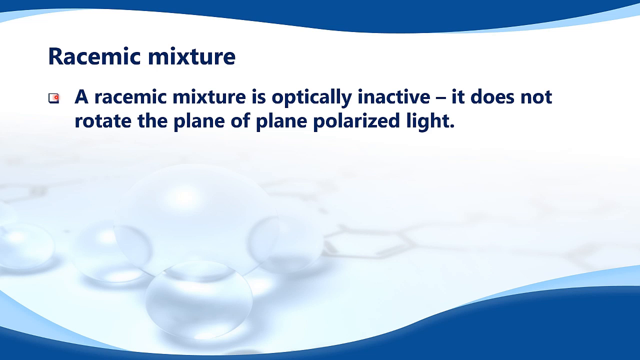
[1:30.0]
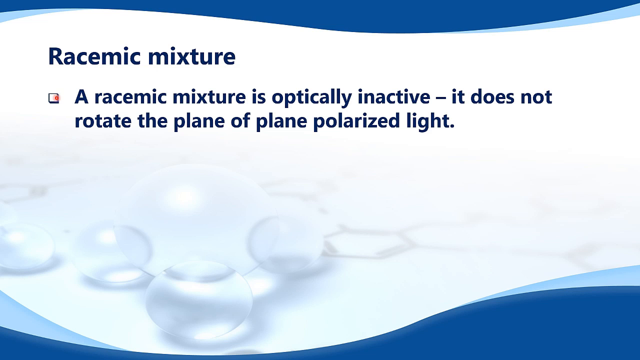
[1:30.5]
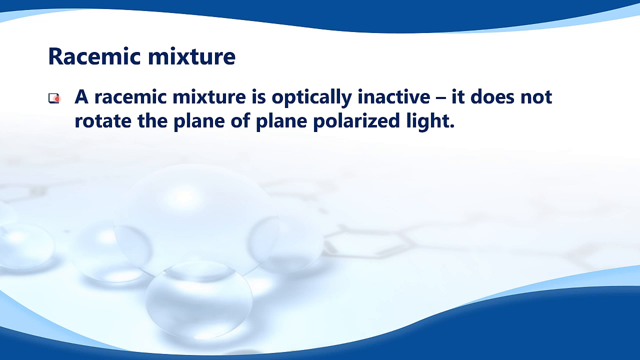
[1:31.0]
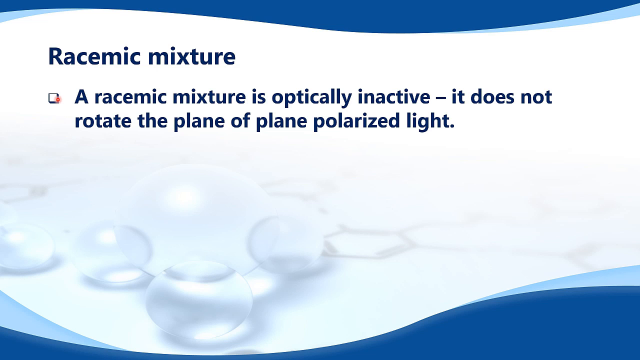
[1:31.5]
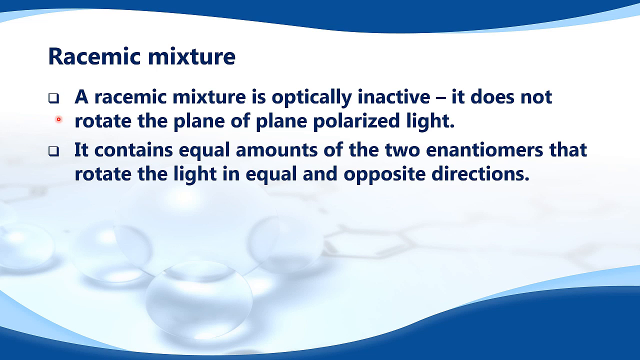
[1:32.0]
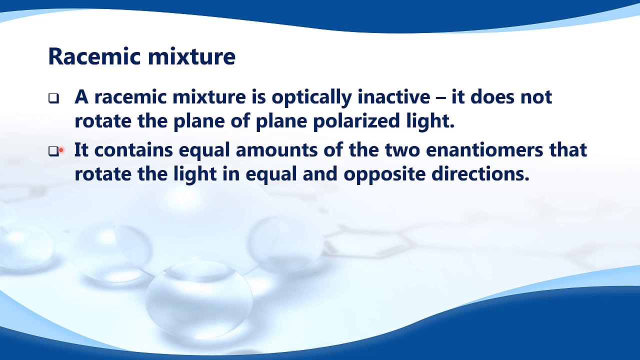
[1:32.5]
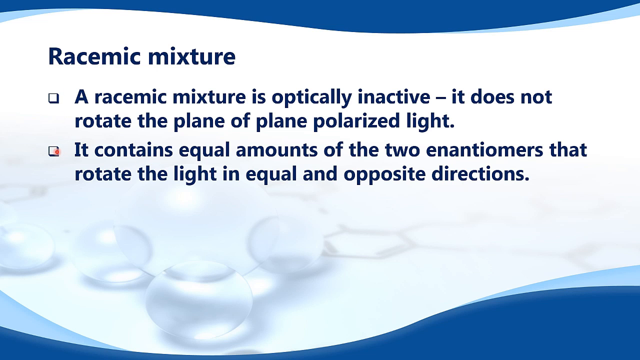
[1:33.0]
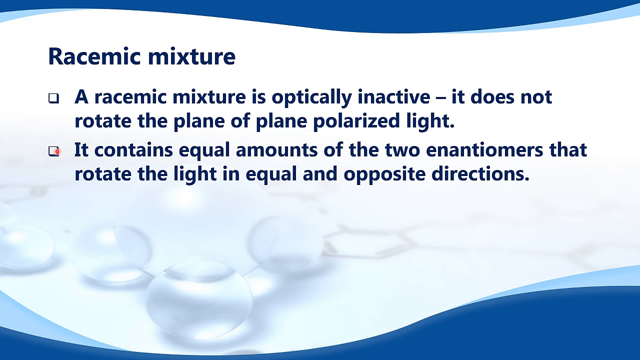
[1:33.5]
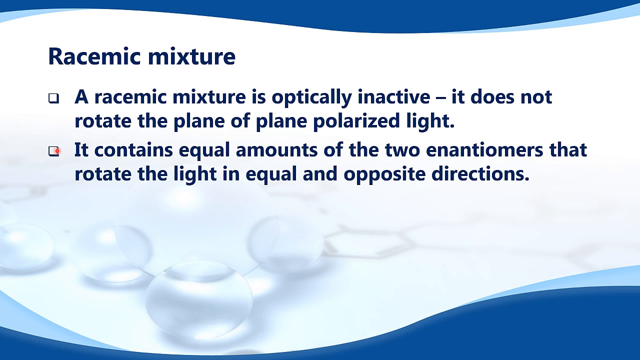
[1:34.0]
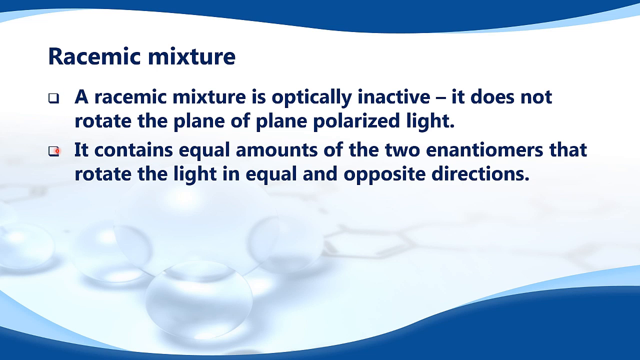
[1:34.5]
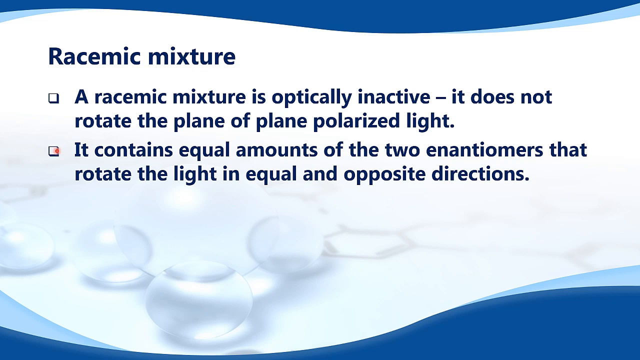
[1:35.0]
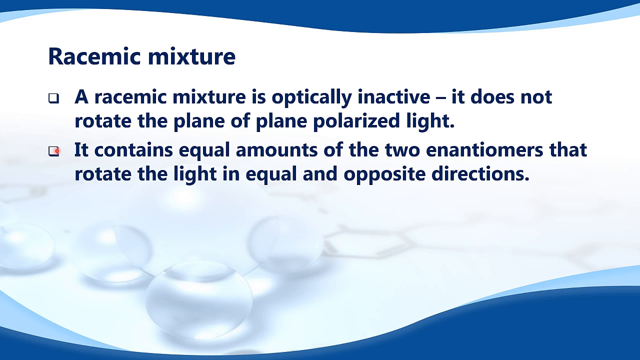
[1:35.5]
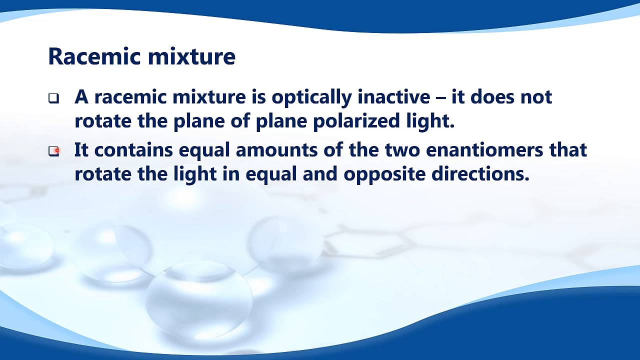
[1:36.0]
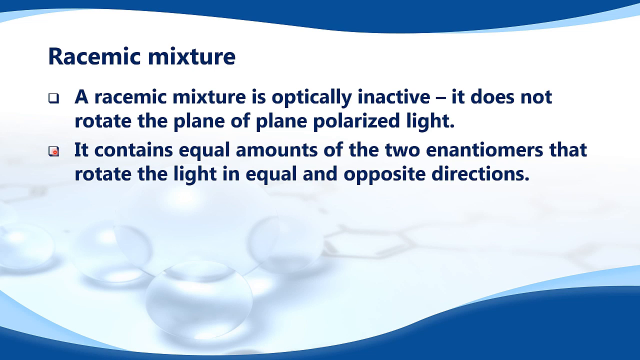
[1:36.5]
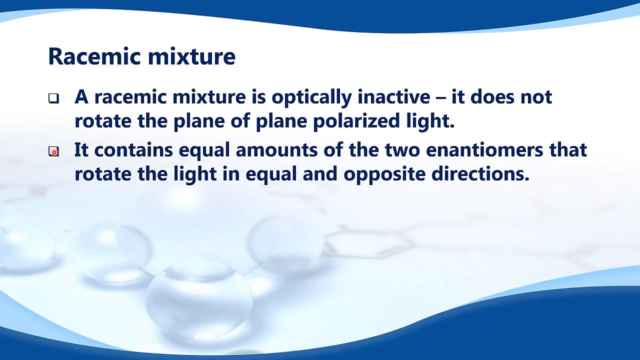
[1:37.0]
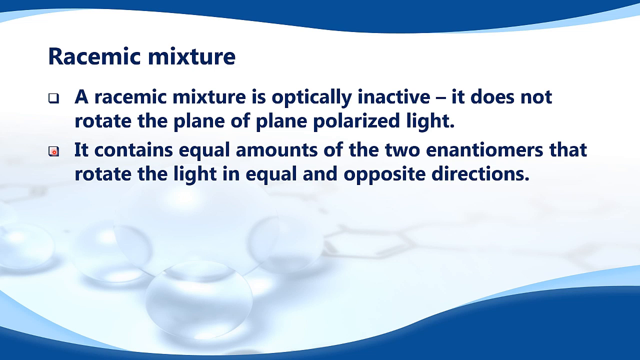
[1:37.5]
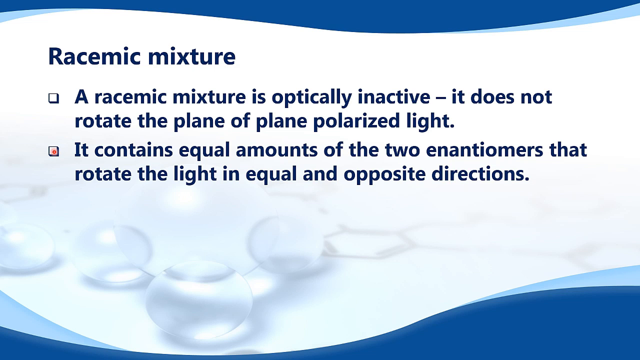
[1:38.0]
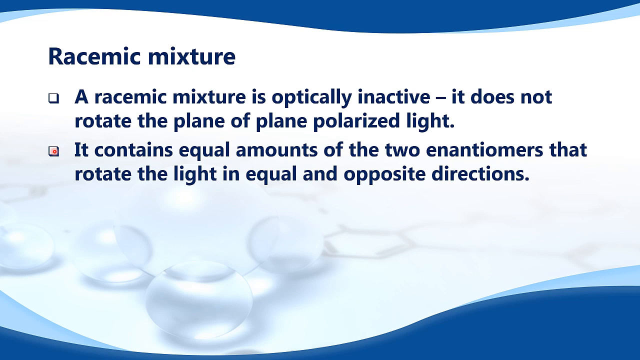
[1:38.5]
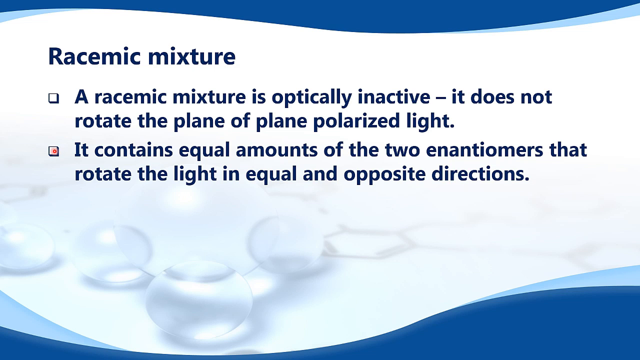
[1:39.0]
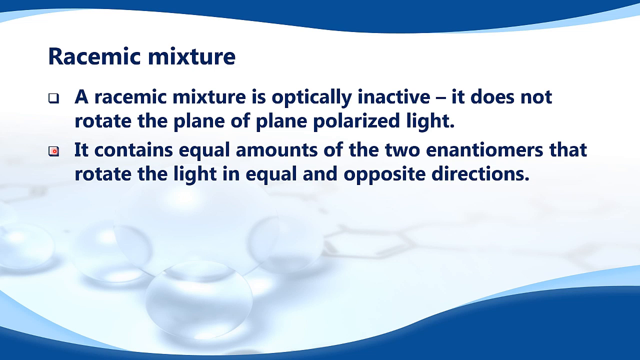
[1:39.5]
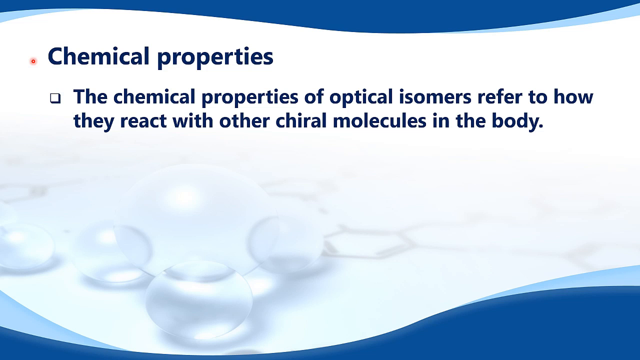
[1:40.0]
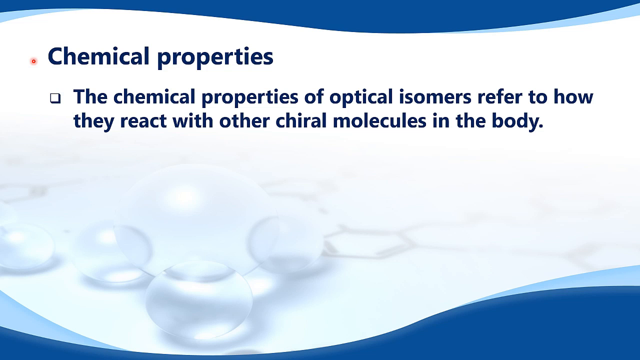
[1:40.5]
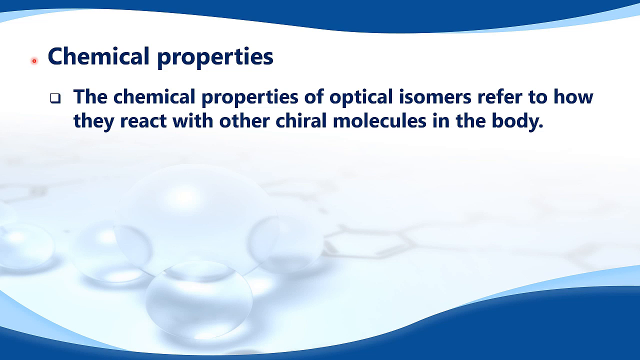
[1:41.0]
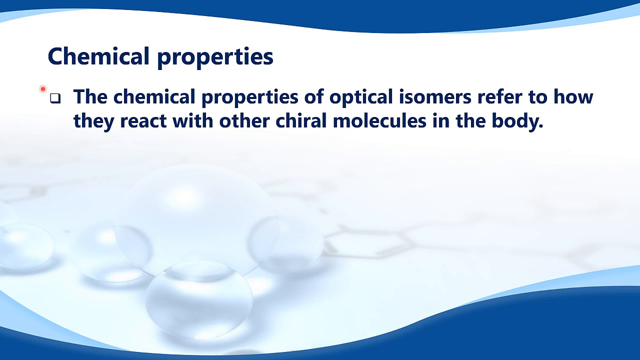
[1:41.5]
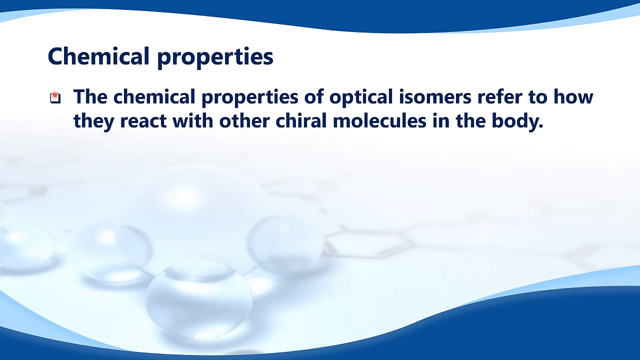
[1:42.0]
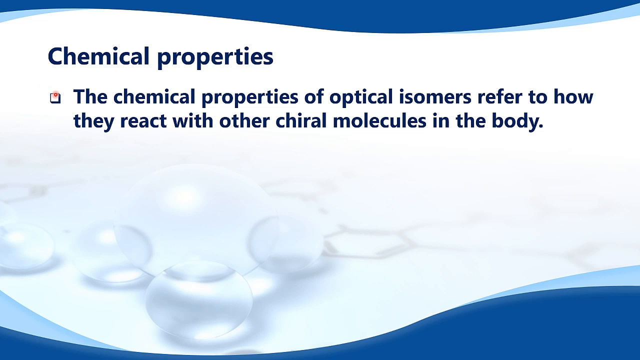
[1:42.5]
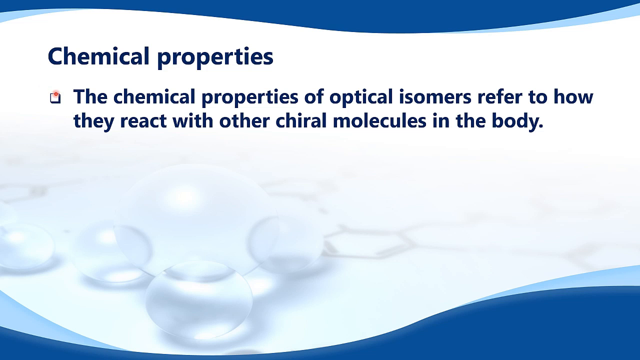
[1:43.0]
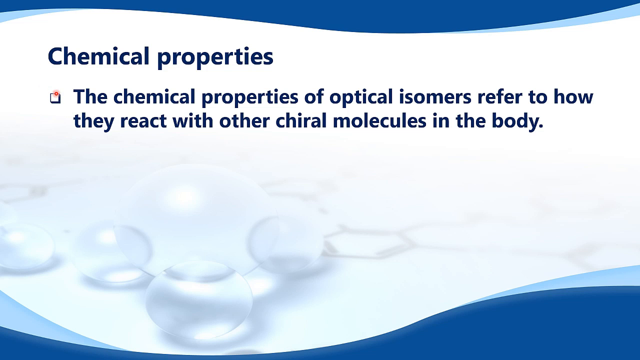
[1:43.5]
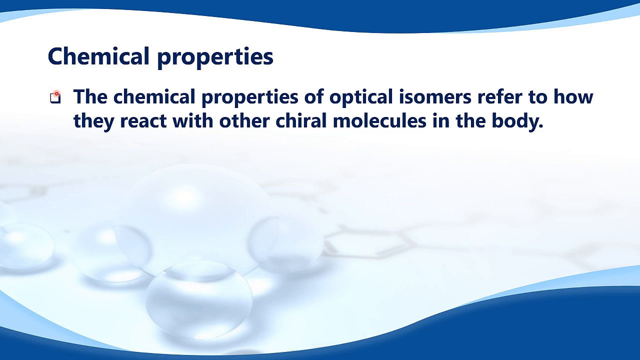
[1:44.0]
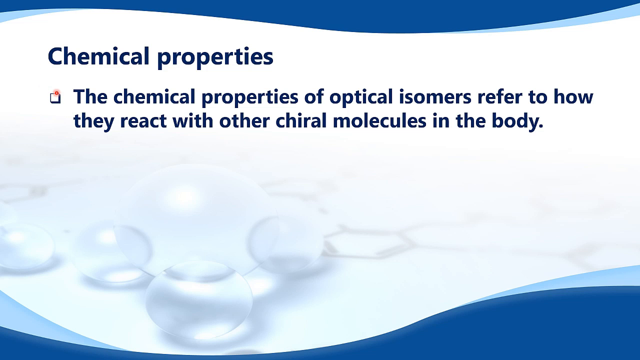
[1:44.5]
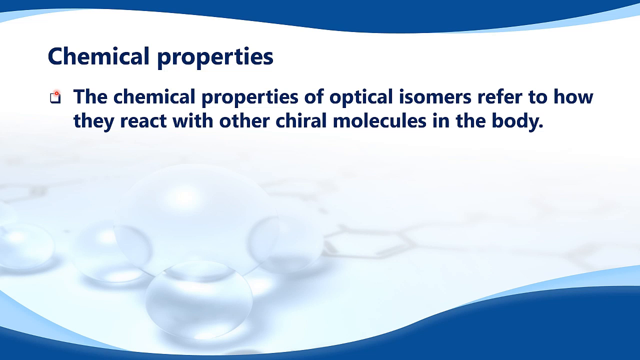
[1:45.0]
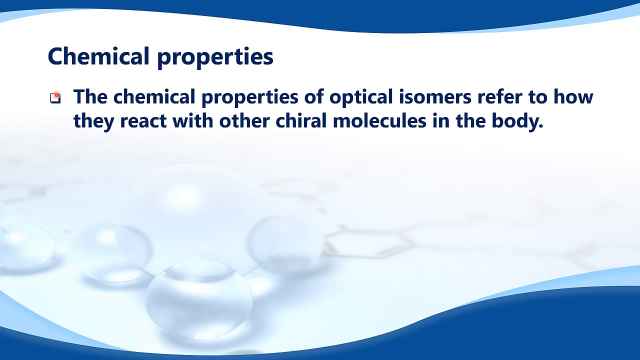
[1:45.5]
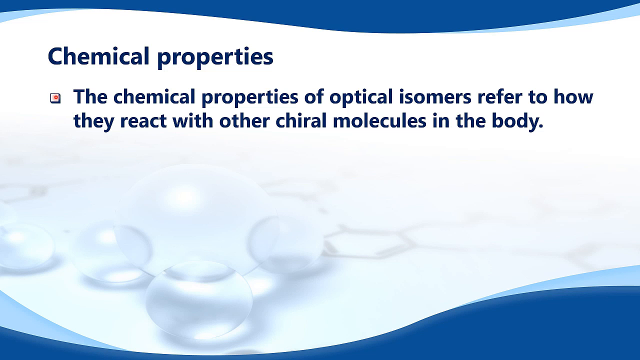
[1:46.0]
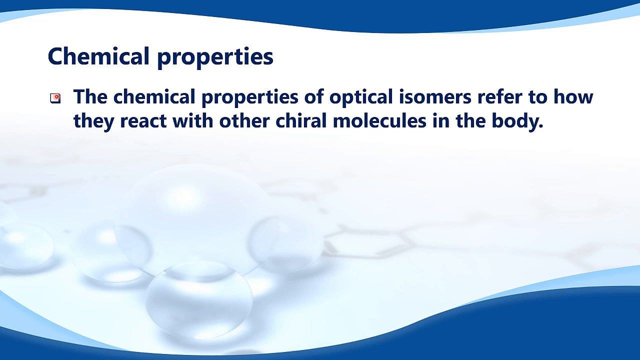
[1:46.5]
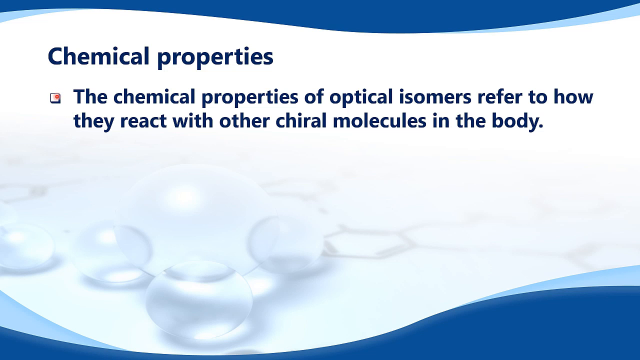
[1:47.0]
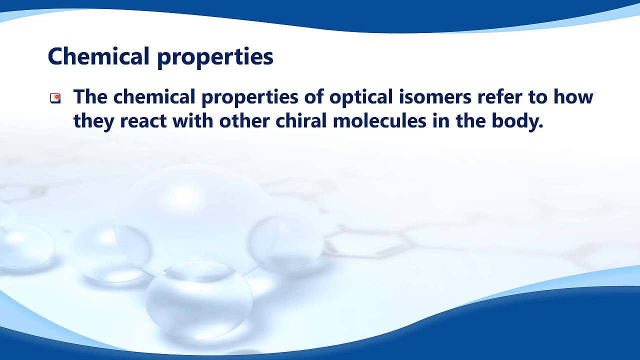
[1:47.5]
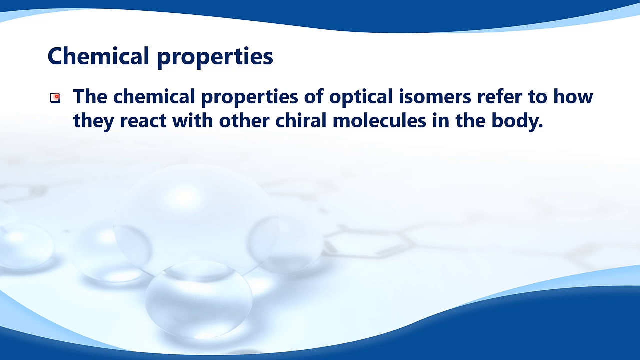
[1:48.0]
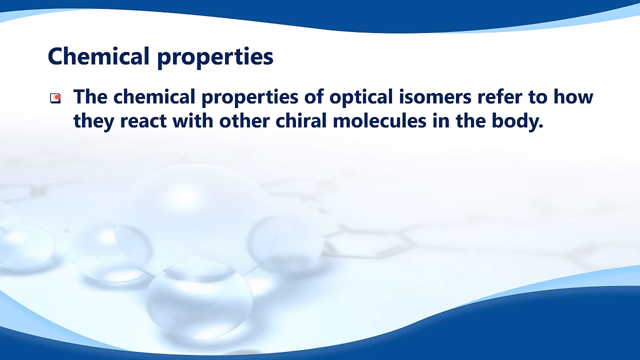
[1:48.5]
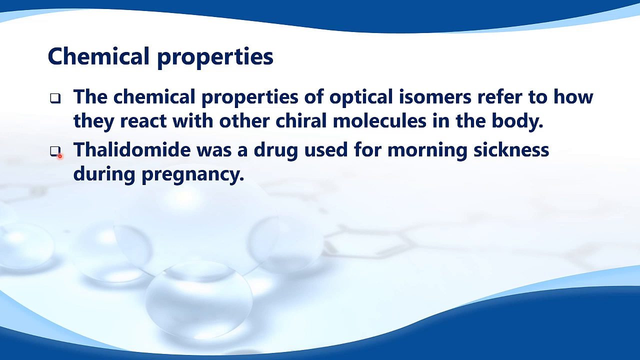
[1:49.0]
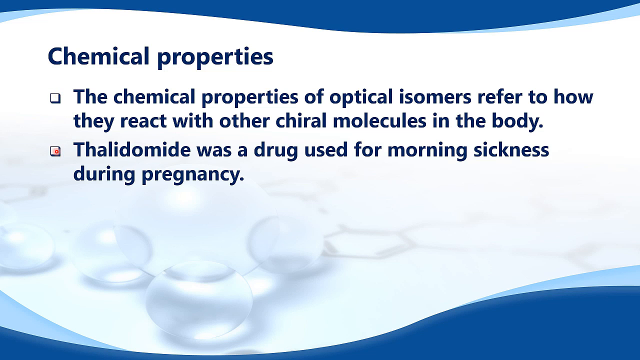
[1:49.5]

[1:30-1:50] The illustrations disappear and new text appears, while the waves and white background remain. The title reads "racemic mixture". The first bullet point reads "a racemic mixture is optically inactive - it does not rotate the plane of plane polarized light". The next reads "it contains equal amounts of the two enantiomers that rotate the light in equal and opposite directions". The orange laser dot follows each item as it appears one at a time. Then that all goes away, and a new title on the left reads "chemical properties". The first bullet point reads "the chemical properties of optical isomers refer to how they react with other chiral molecules in the body", again marked by a little square instead of a dot. The second bullet point reads "thalidomide was a drug used for morning sickness during pregnancy".